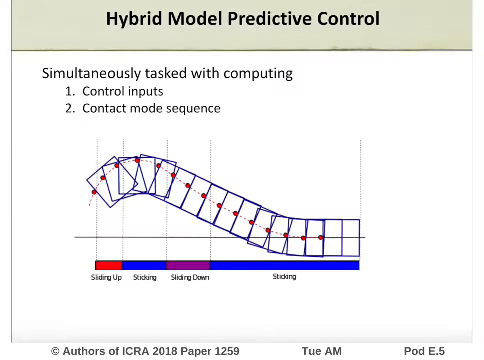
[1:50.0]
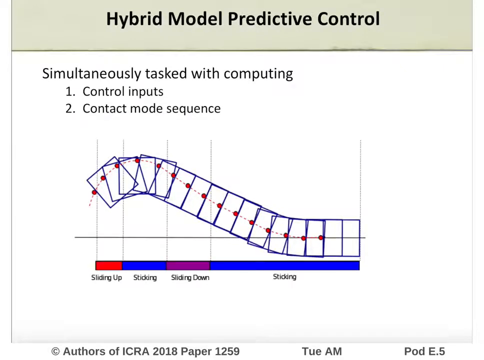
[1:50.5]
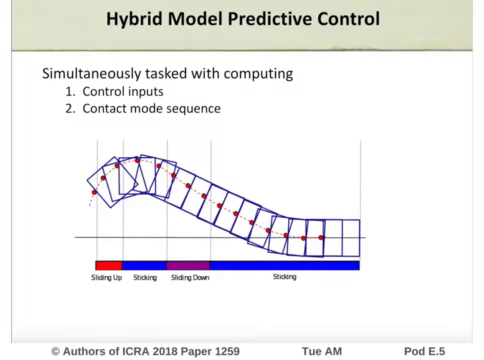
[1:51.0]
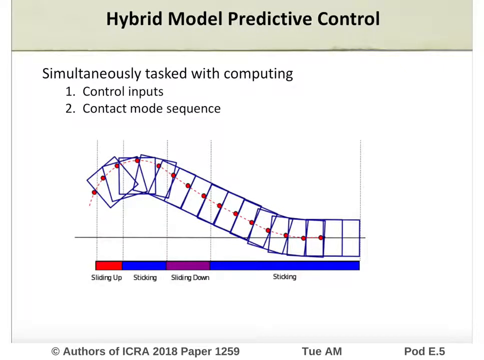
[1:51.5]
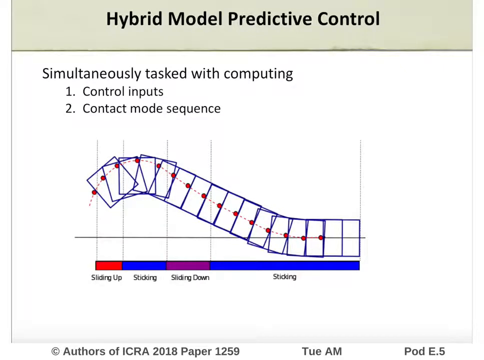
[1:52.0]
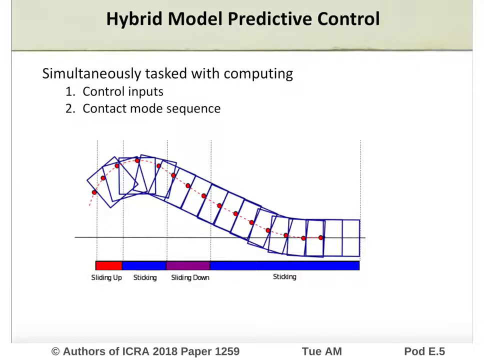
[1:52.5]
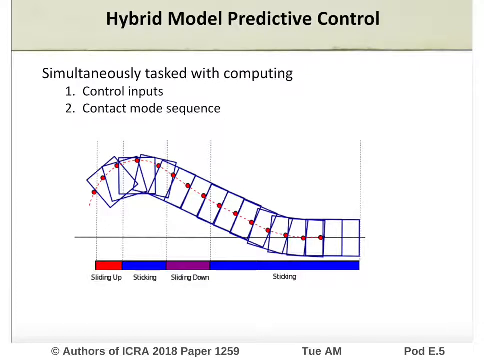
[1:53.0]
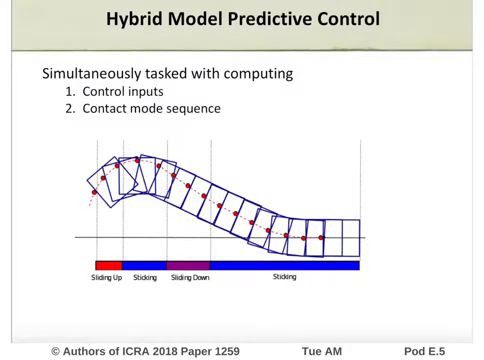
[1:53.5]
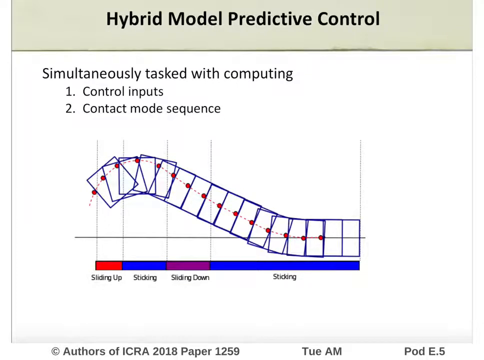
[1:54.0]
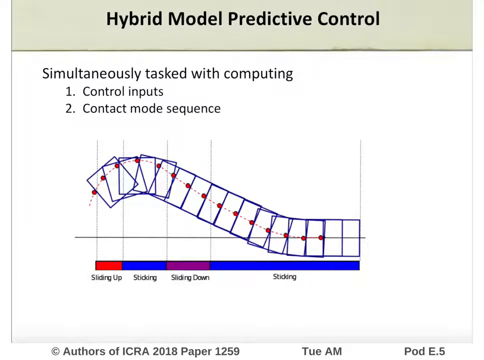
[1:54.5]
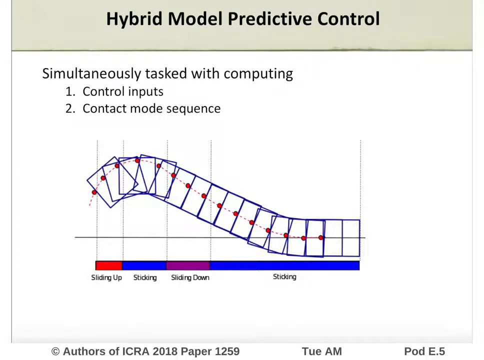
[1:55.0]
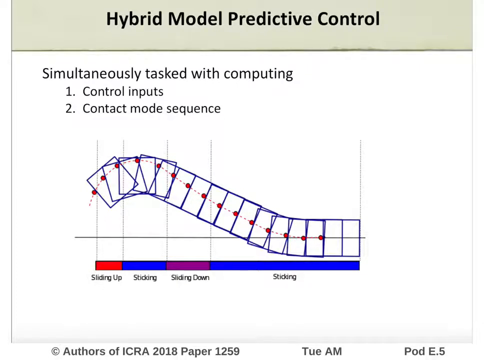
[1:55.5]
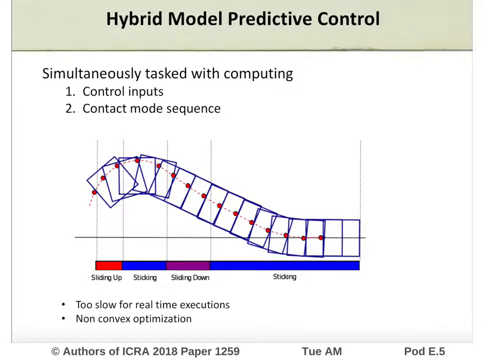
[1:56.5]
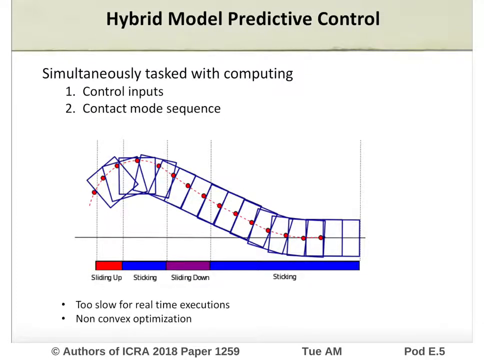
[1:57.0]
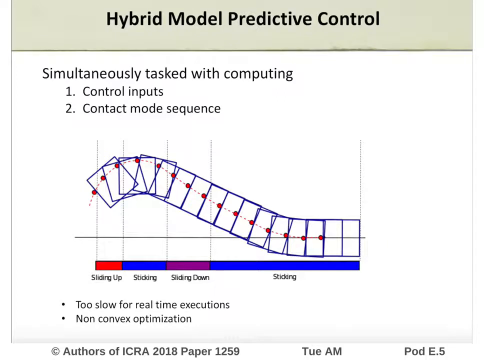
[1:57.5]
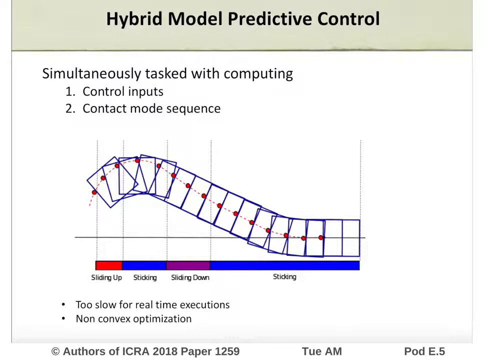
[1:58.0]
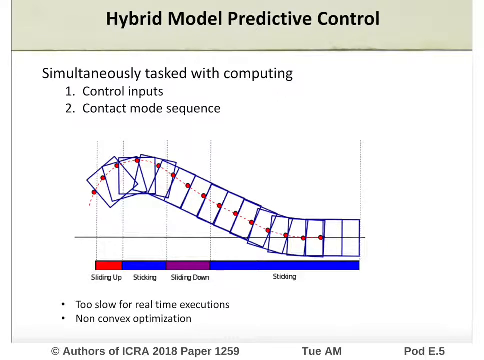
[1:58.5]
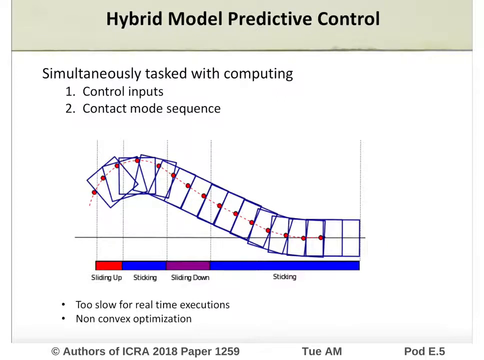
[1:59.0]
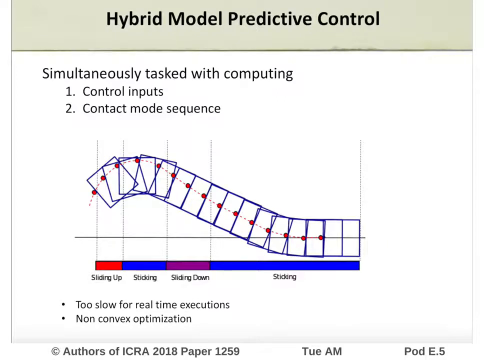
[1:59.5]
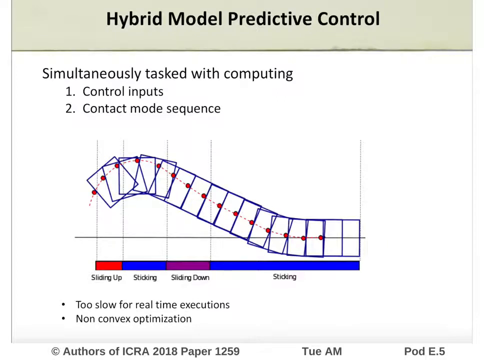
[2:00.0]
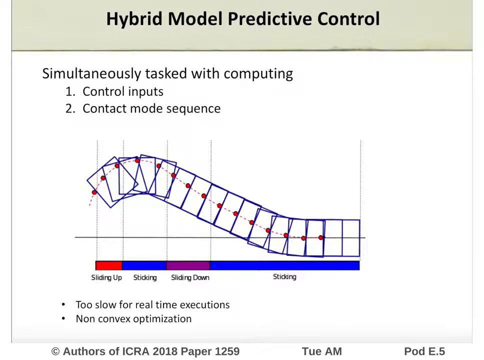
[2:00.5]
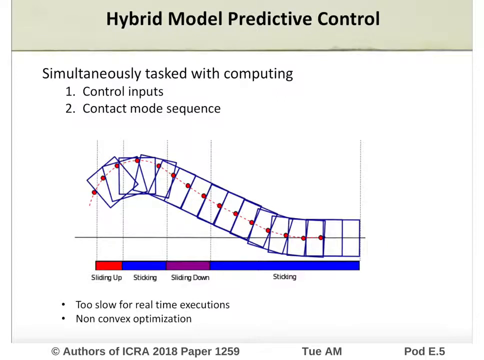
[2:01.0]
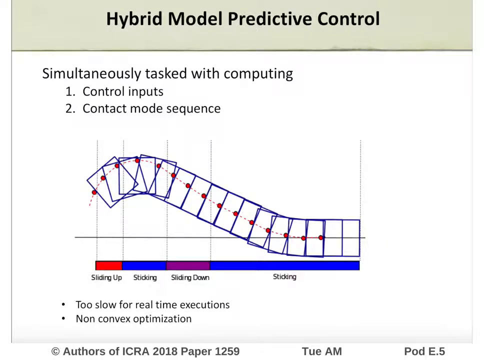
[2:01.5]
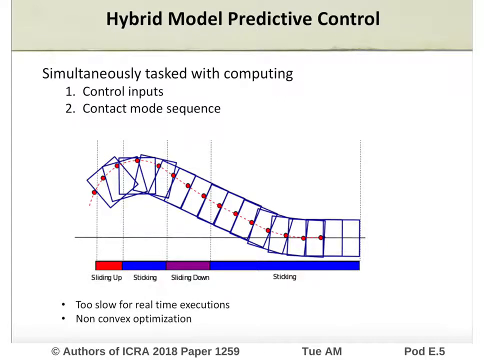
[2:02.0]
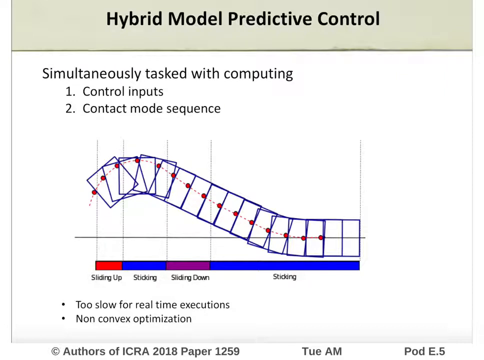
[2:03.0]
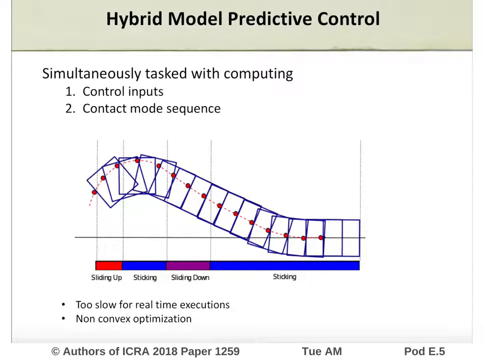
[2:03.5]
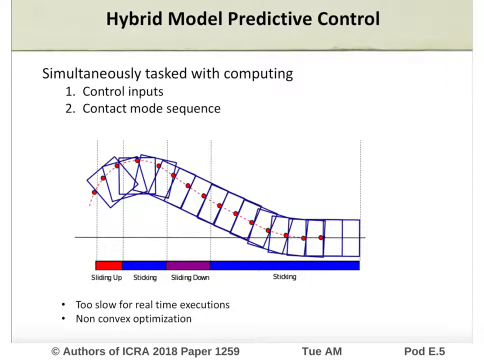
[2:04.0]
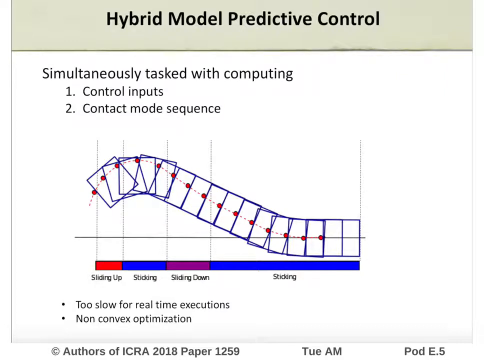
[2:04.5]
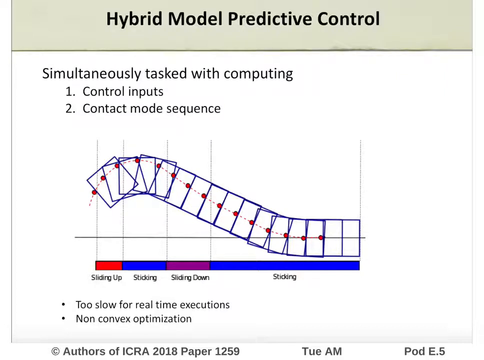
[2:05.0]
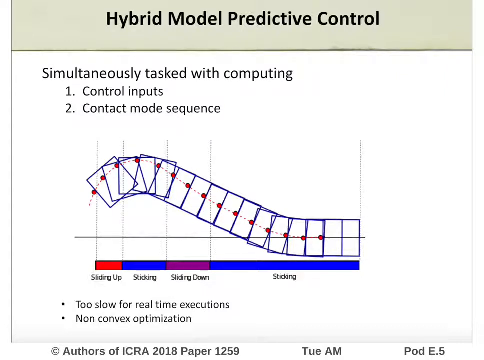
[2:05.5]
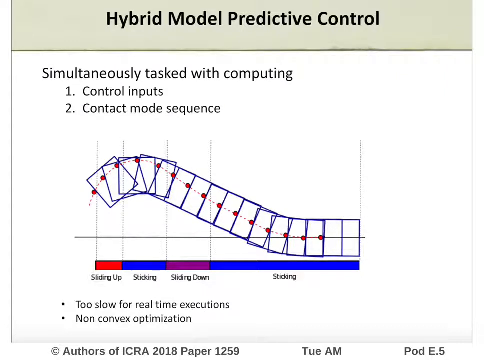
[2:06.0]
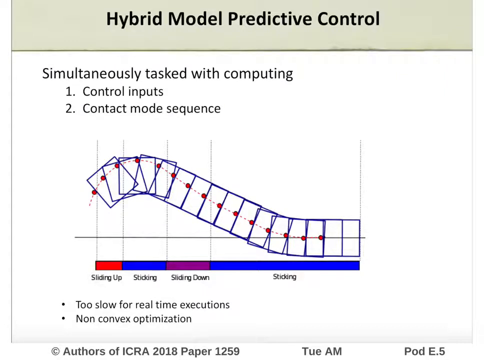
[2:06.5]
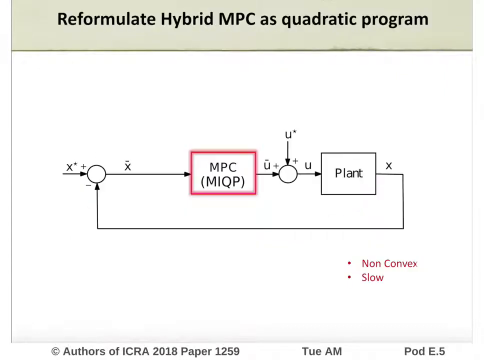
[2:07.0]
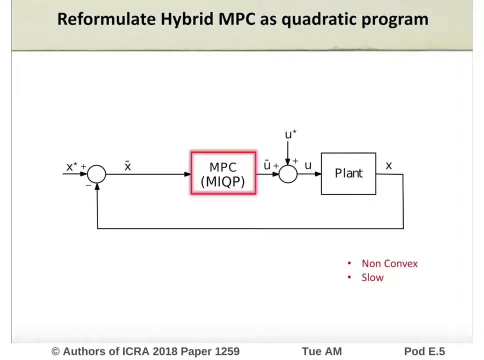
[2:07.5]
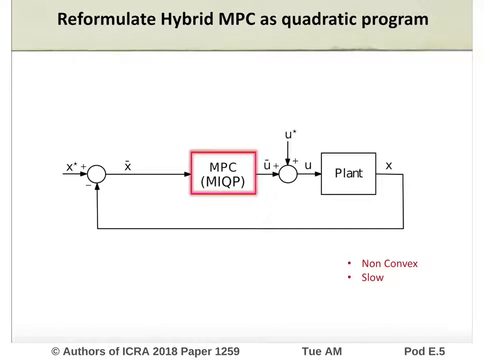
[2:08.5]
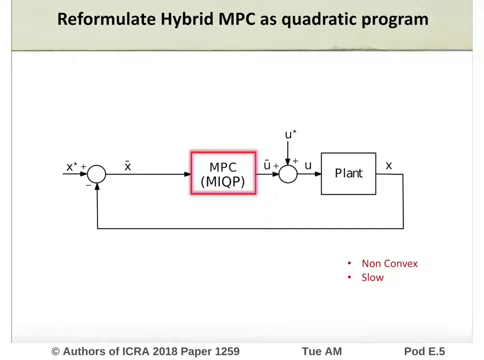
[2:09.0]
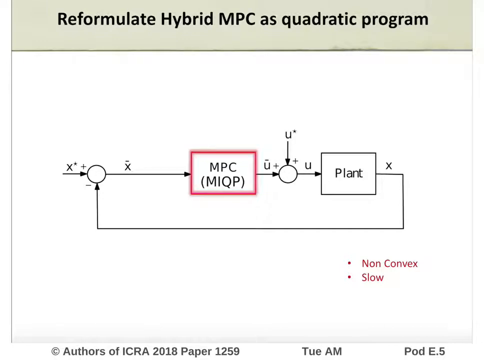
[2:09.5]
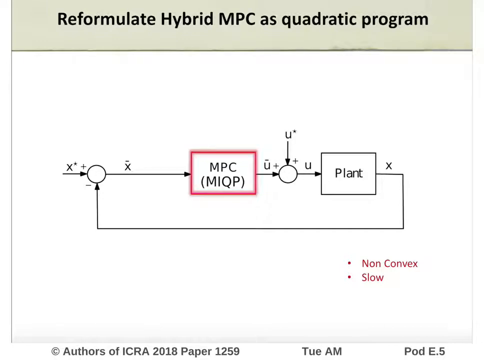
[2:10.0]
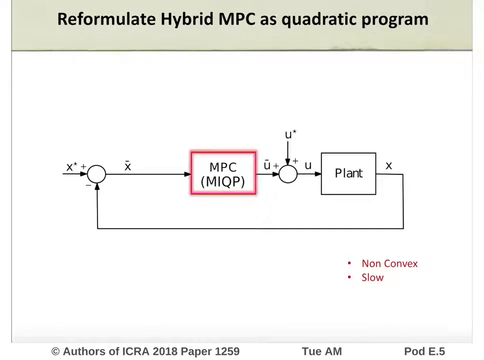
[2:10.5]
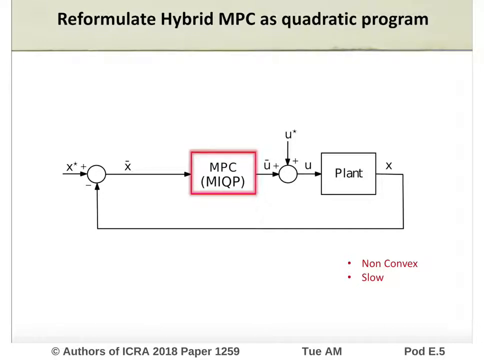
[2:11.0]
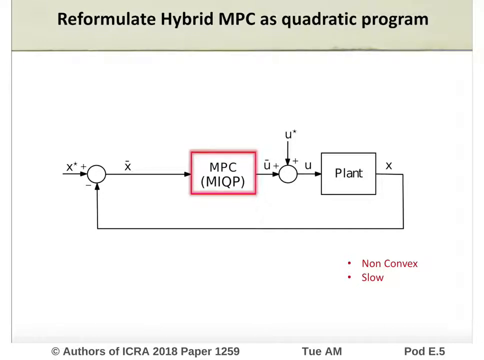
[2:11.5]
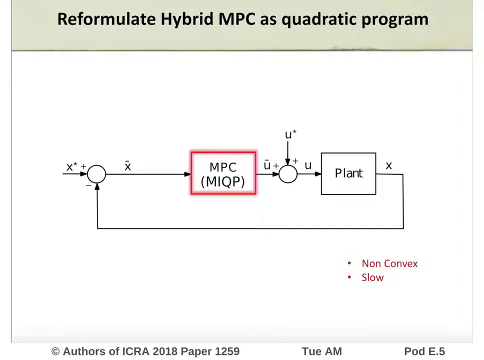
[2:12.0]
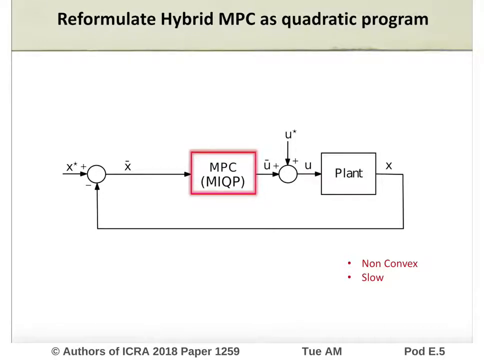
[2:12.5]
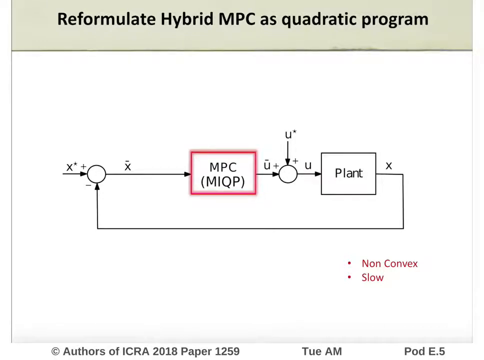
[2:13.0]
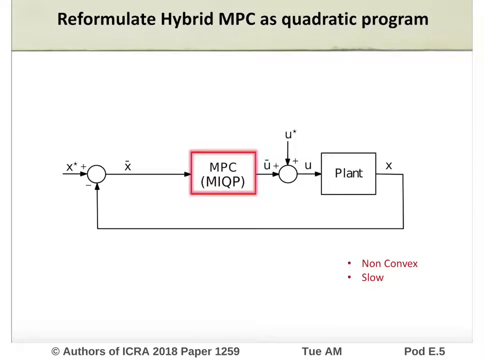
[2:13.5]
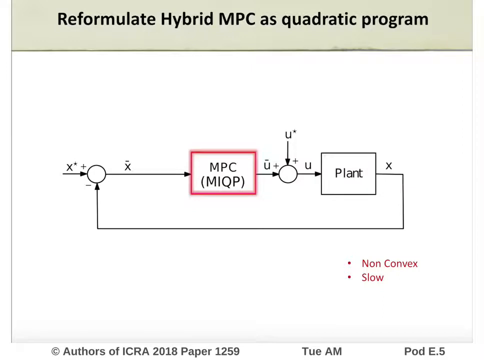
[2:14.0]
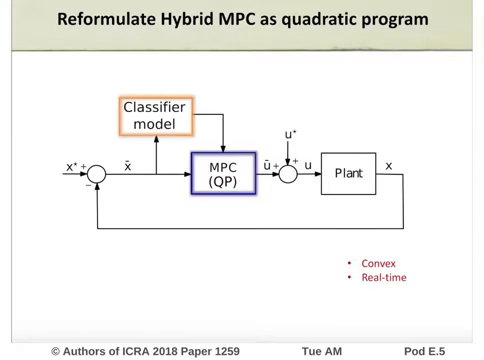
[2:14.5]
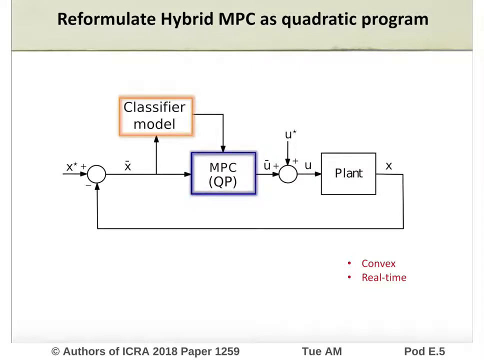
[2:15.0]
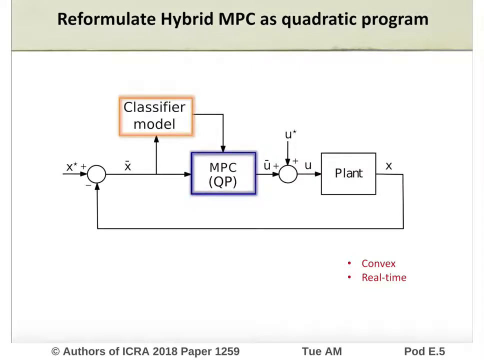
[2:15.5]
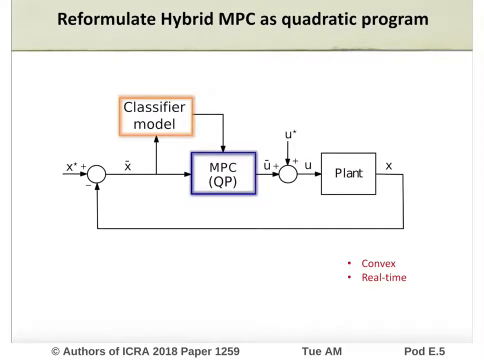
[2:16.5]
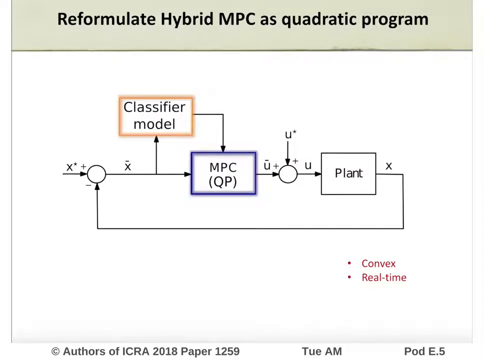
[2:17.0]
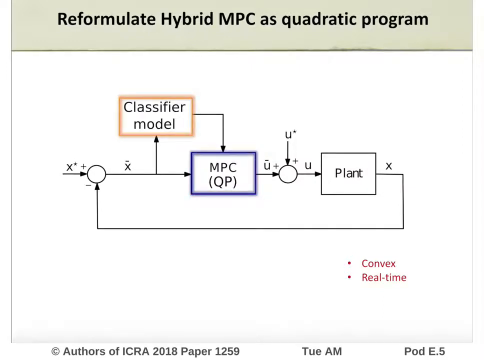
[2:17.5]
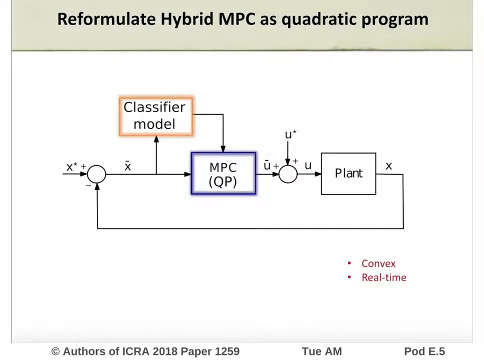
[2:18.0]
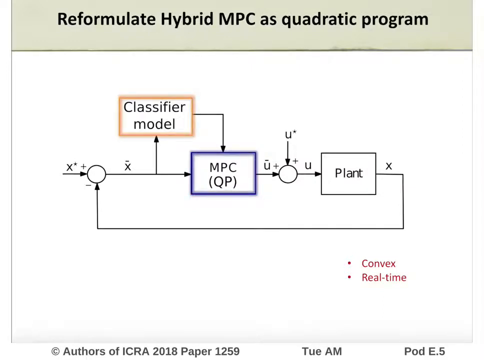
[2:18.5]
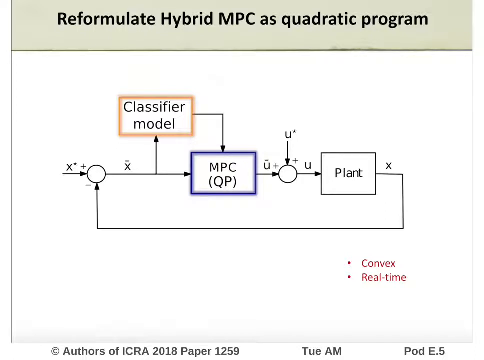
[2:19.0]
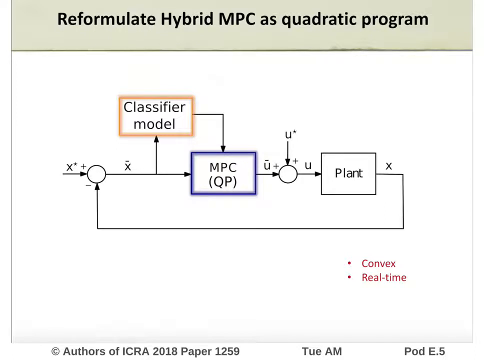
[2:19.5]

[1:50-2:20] The hybrid model predictive control text, simultaneously tasked with computing the control inputs and the contact mode sequence, is shown with phases labeled sliding up, sticking, sliding down, and then a long stretch of sticking. The red dot starts higher up on the square and gradually goes lower, more toward the middle, and while sticking it is right in the middle. Sliding up is shown in kind of a bright orange, sticking in blue, sliding down in purple, and then sticking in blue again. Text reads "too slow for real-time executions" and "non-convex optimization," then "reformulate hybrid MPC as quadratic program." A diagram full of letters, many X's and U's, includes "plant" and "MPC (MIQP)" labeled "non-convex and slow." Reformulated as a quadratic program, it changes to a classifier model outlined in orange and a rectangle for the MPC QP in purple, labeled "convex real time," with arrows and X's.